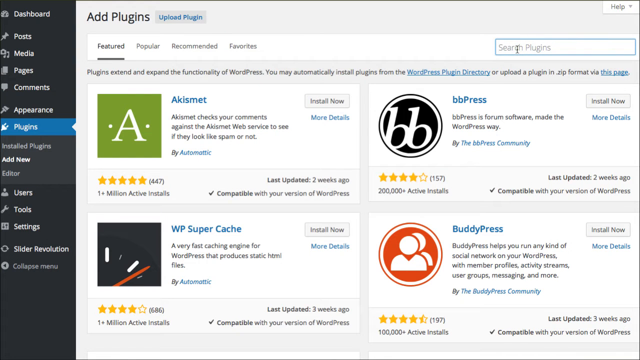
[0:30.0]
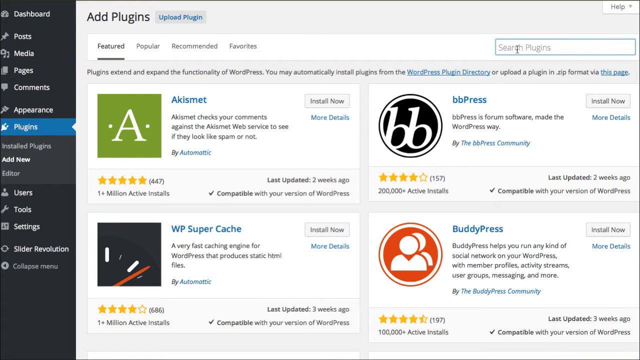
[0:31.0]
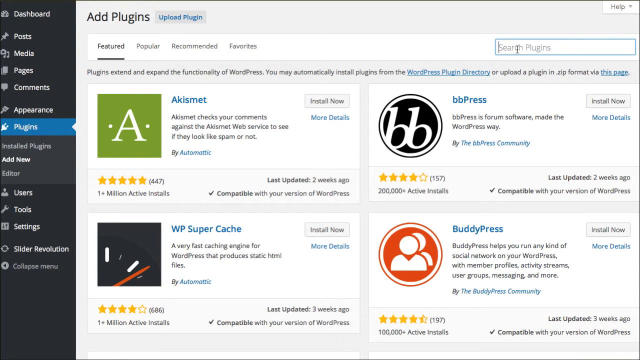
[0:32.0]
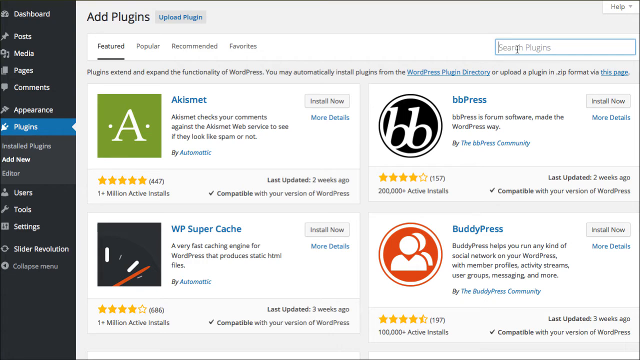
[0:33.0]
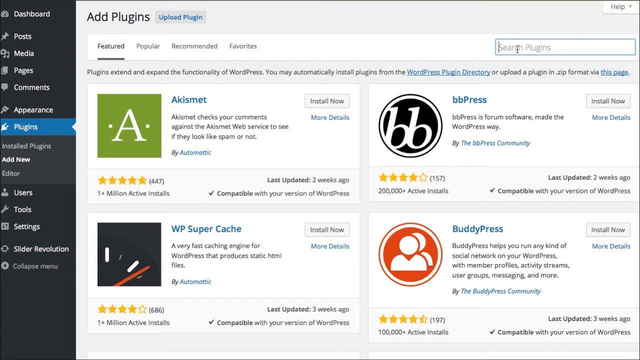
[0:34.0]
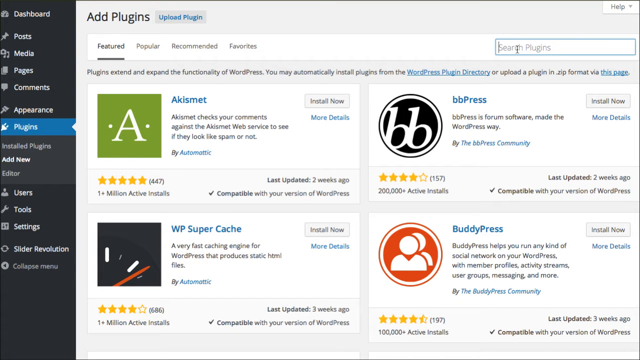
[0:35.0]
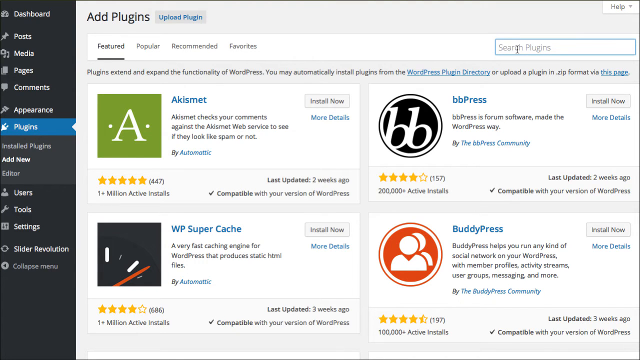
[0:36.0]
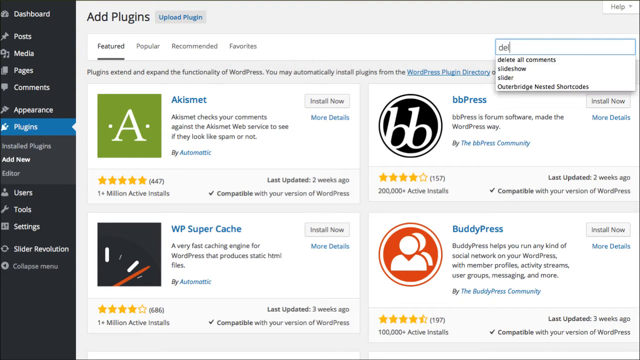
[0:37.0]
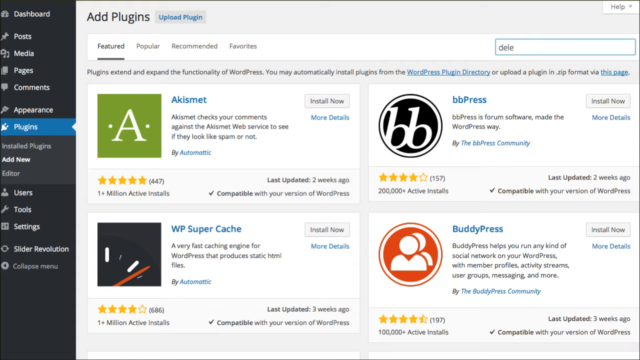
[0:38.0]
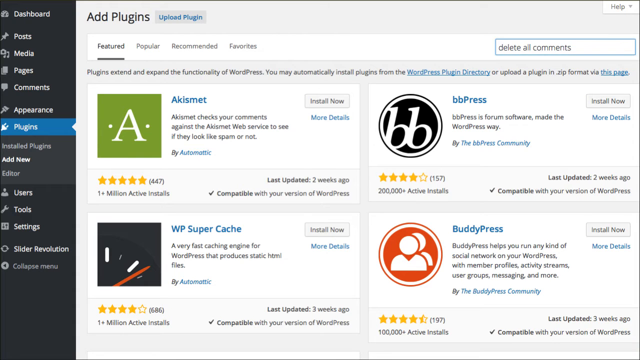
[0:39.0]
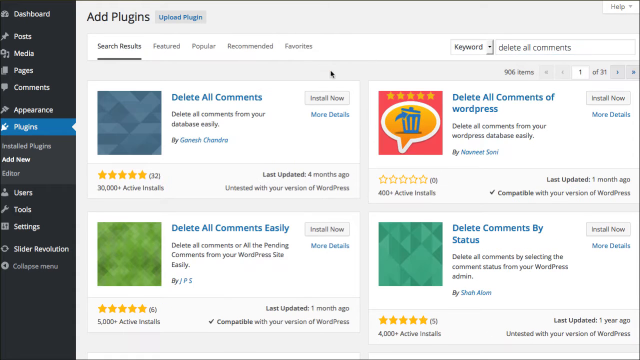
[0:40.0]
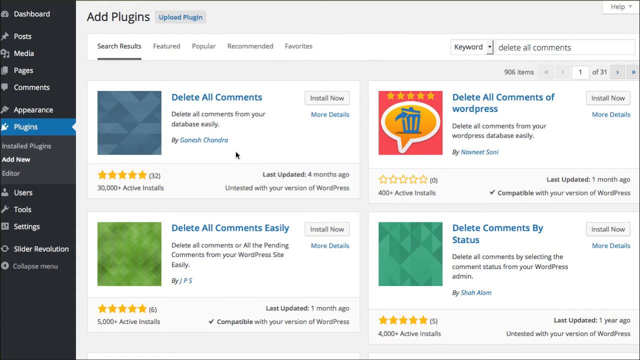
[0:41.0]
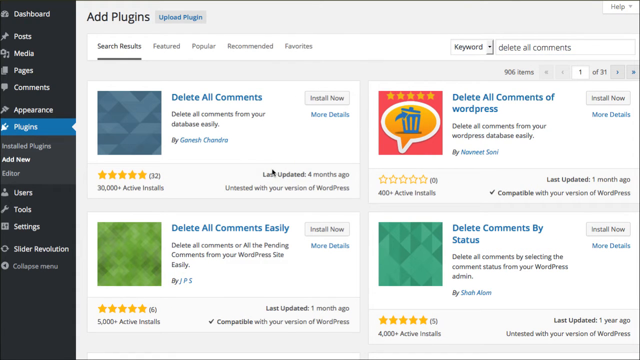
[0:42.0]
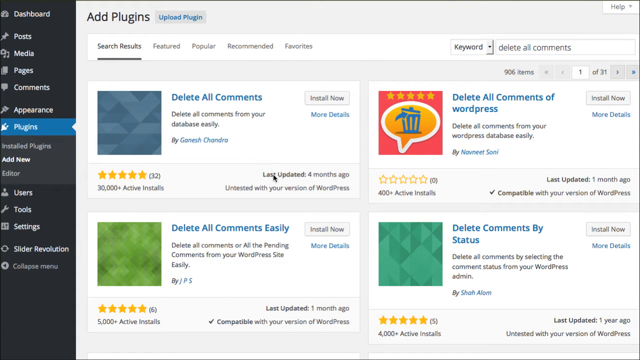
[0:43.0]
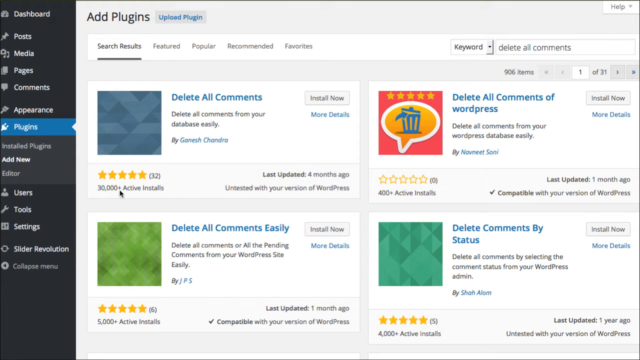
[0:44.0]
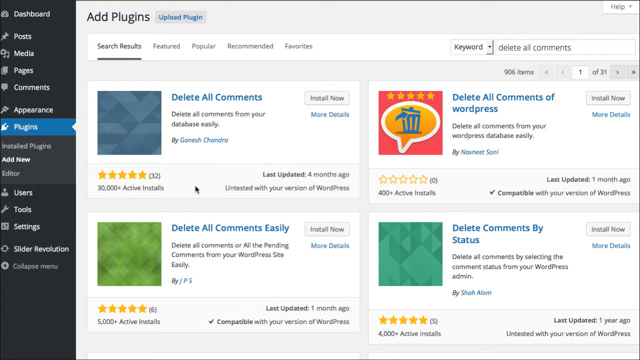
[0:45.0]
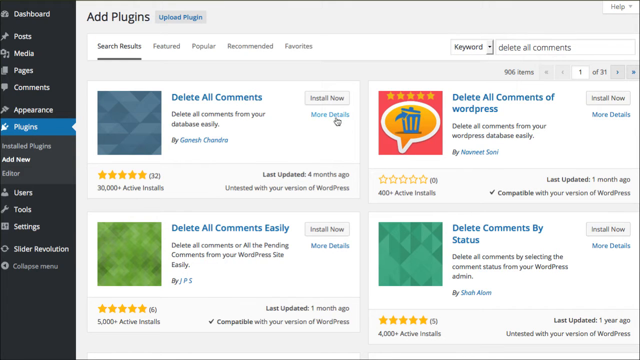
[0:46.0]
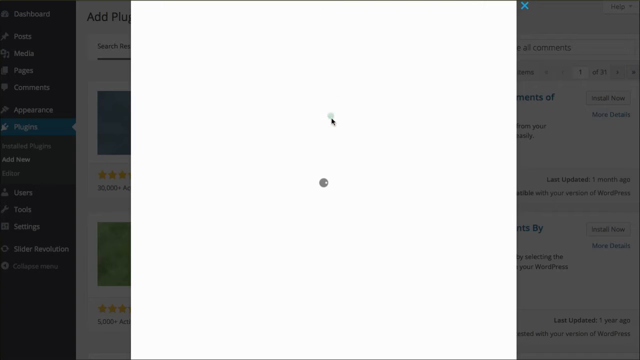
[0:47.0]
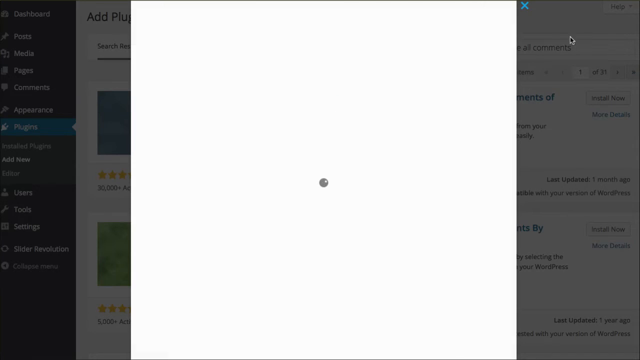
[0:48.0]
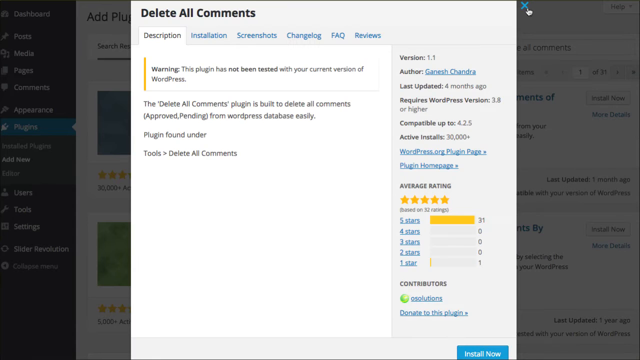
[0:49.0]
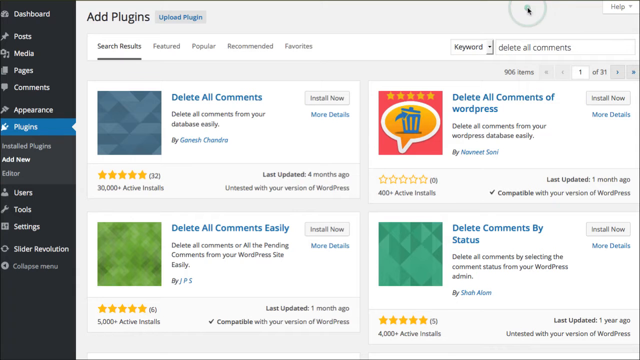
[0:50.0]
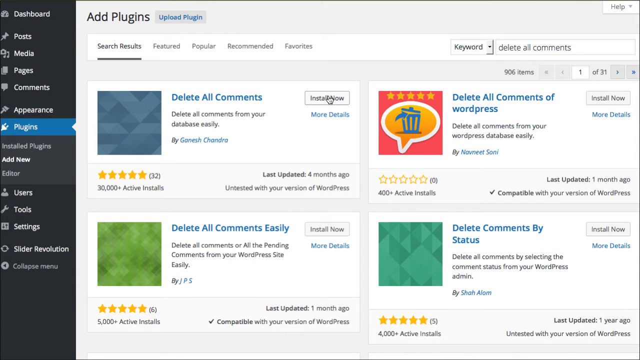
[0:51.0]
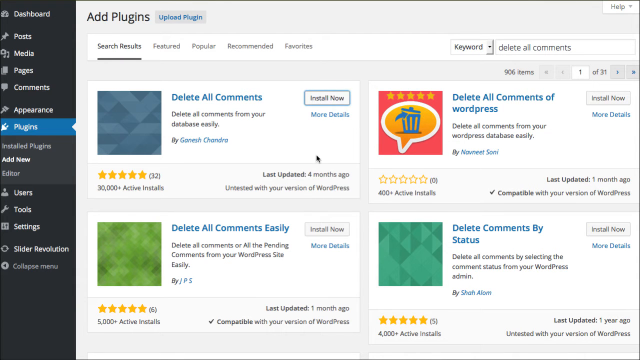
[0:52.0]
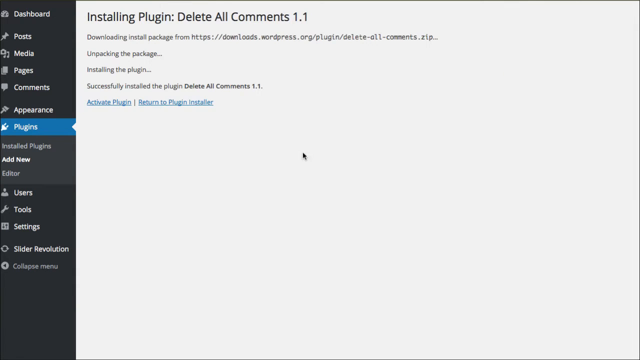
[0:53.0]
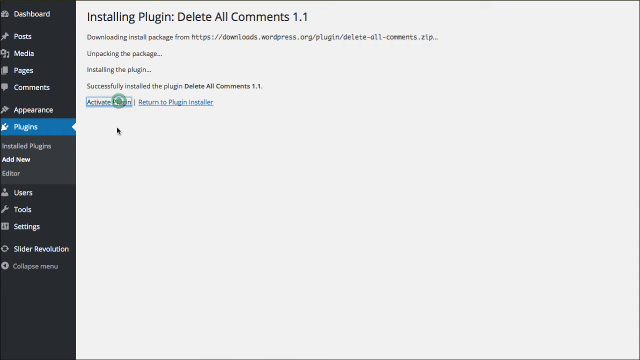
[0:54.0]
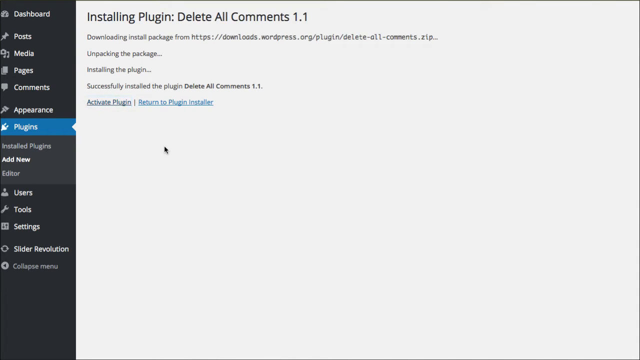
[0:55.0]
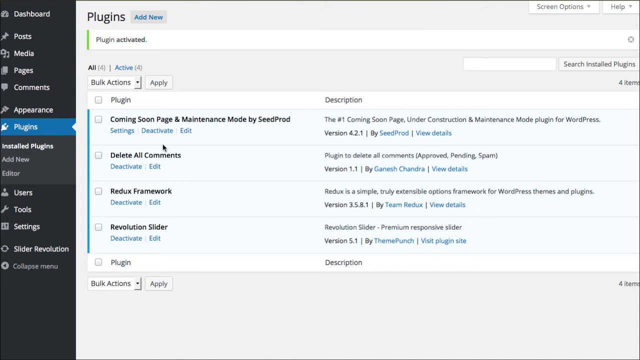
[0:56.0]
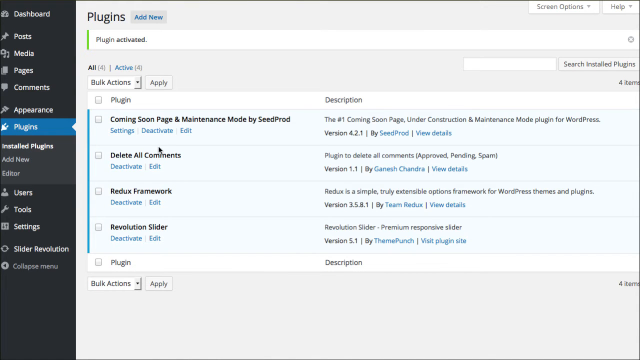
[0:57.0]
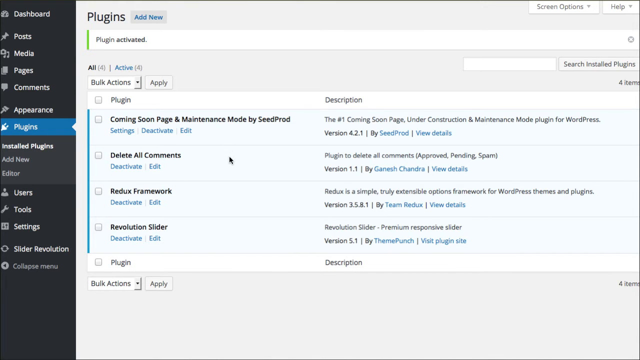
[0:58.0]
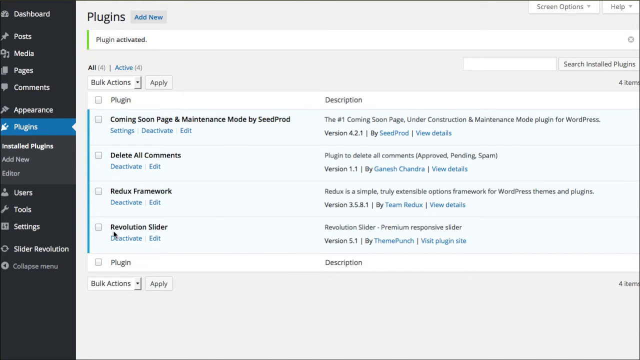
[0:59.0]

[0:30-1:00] With the search plugins button at the top right clicked, the user types in "delete all comments" and searches. A plugin called "delete all comments" appears in the top left of the screen against the white background, showing 30,000 active installs and a 5-star rating with 32 reviews. The user clicks the blue "more details" button, closes the extra information box, and clicks "install now". This leads to a white page that says "installing plugin delete all comments 1.1". The user clicks a blue button that says "activate plugin". A new white screen appears with text at the top reading "Plugins" and "Plugin Activated". The user then clicks "tools" on the left-hand side of the dashboard, and the tools button is highlighted in blue.